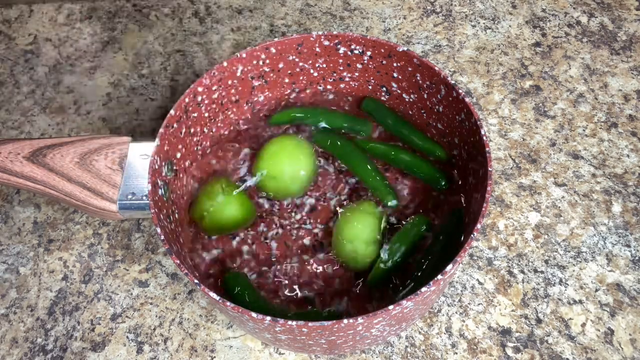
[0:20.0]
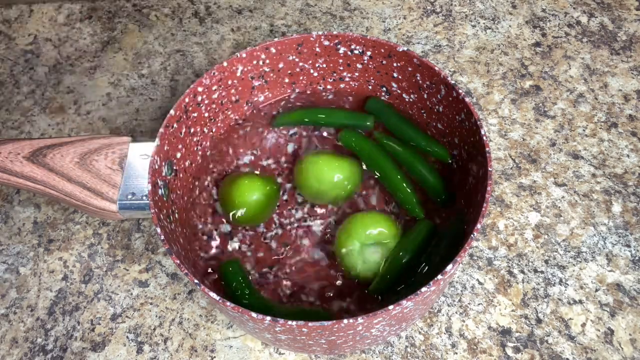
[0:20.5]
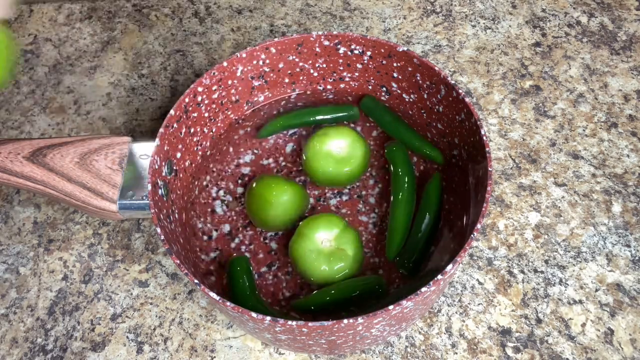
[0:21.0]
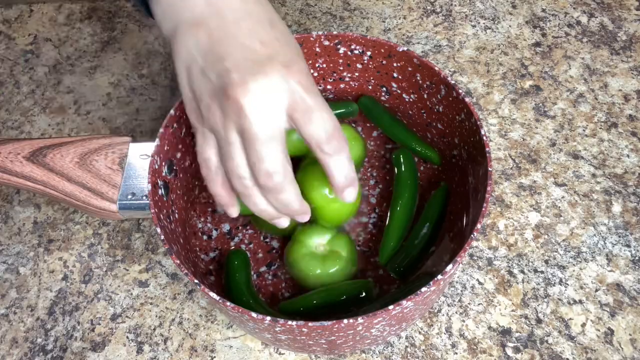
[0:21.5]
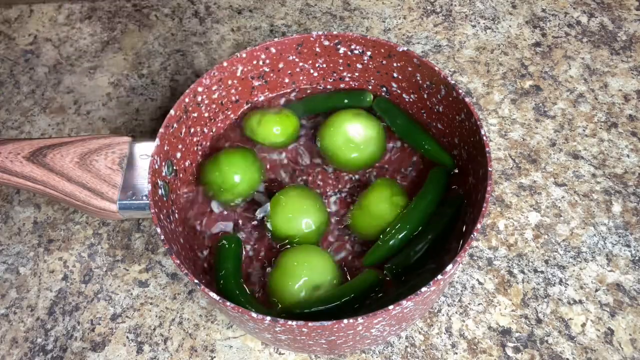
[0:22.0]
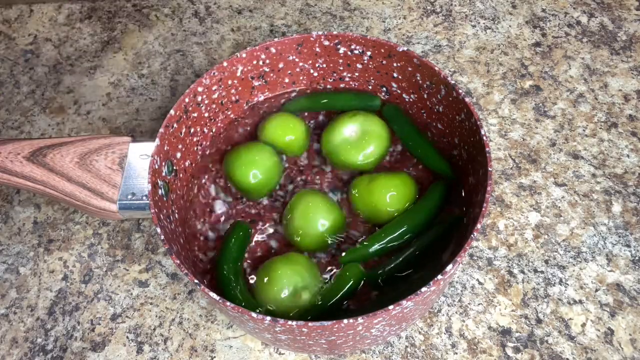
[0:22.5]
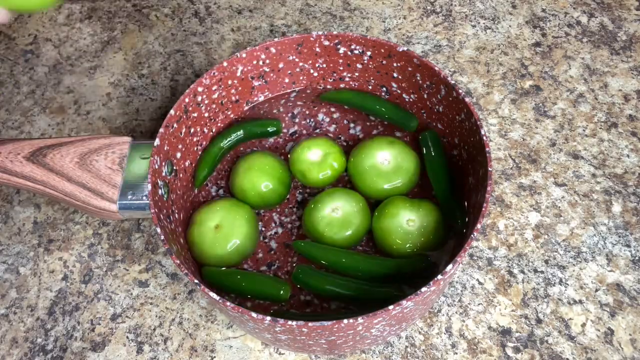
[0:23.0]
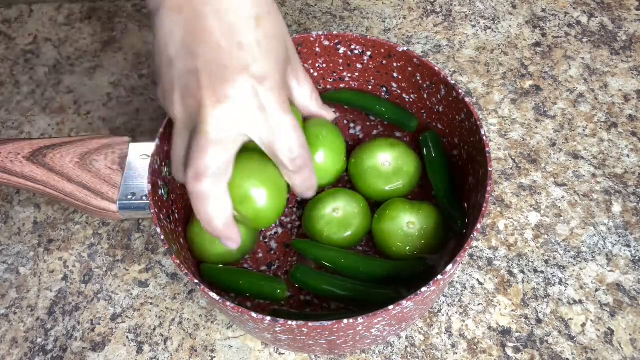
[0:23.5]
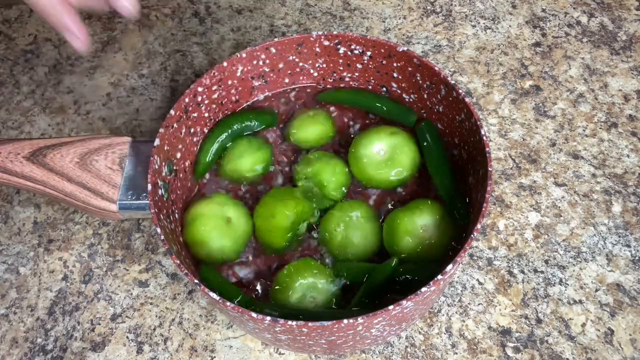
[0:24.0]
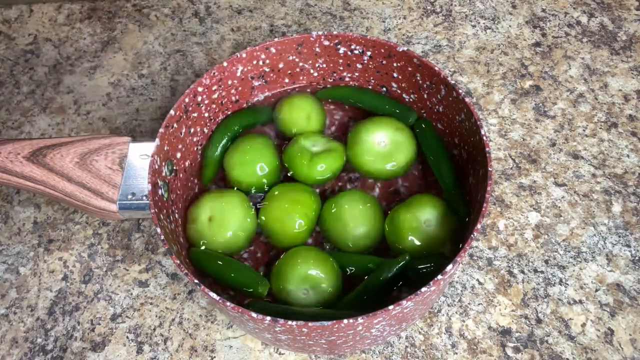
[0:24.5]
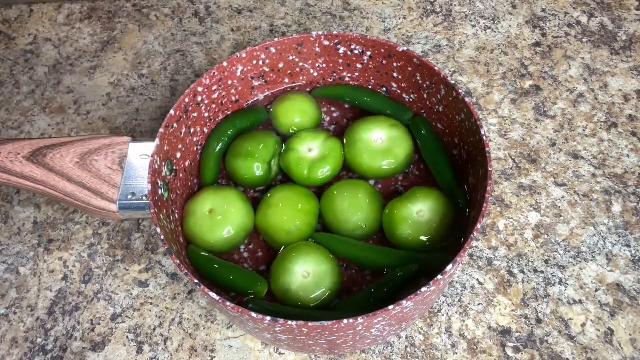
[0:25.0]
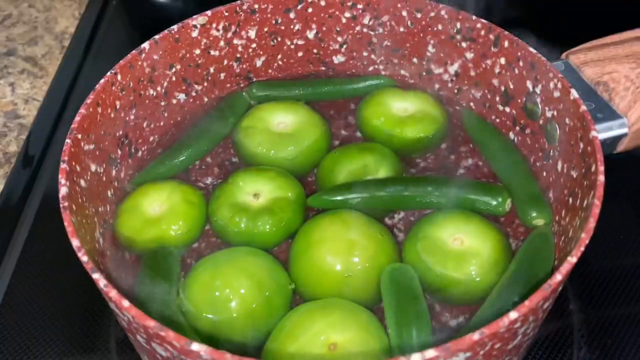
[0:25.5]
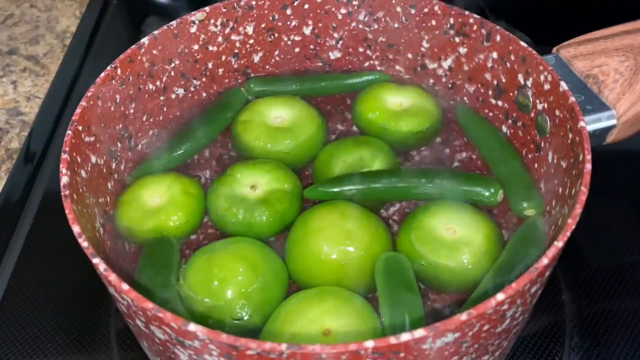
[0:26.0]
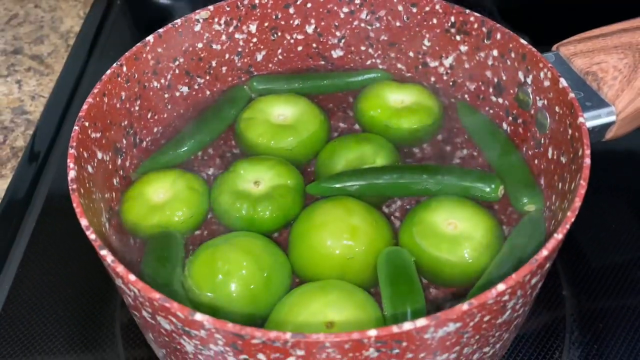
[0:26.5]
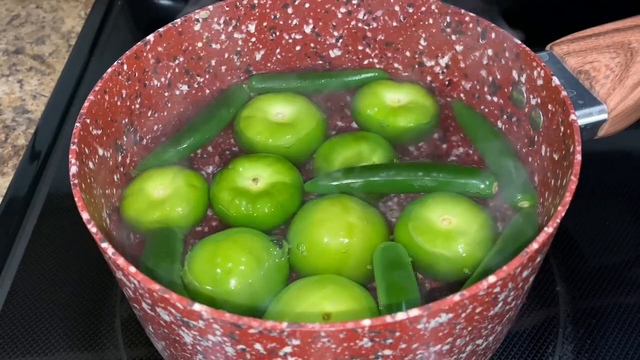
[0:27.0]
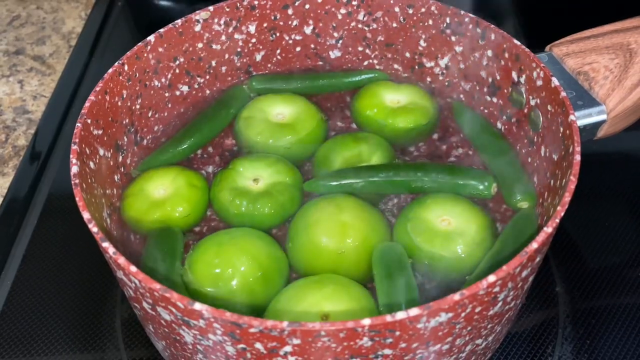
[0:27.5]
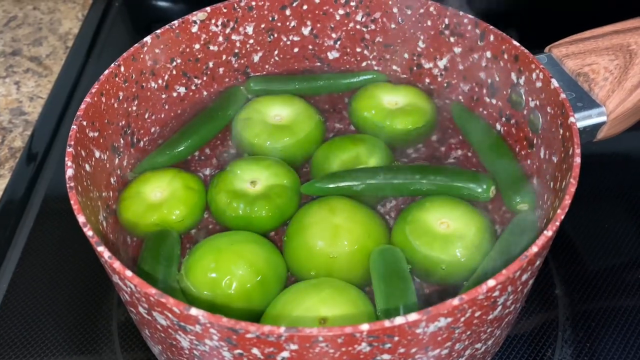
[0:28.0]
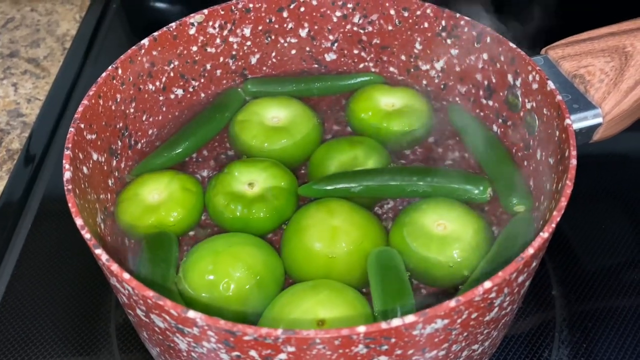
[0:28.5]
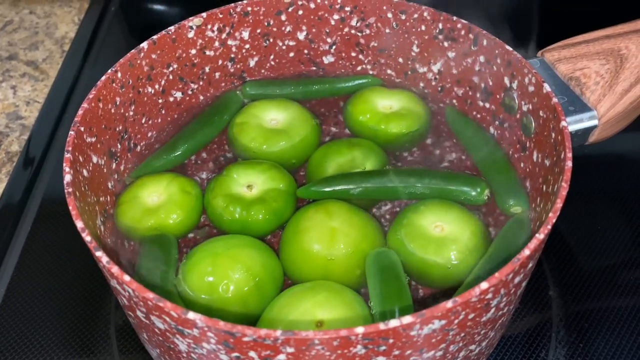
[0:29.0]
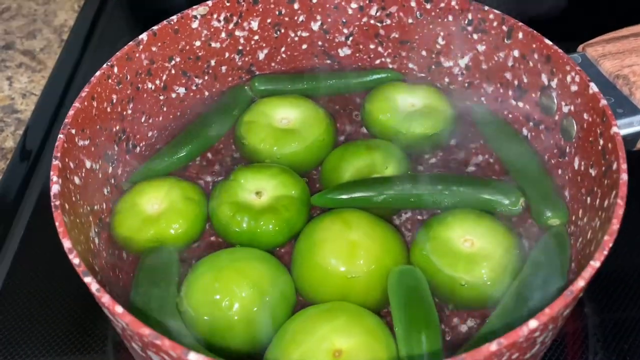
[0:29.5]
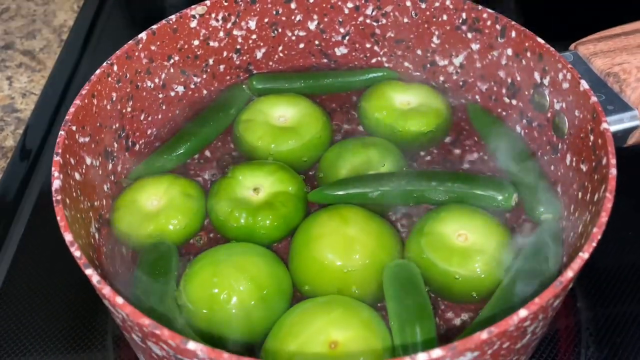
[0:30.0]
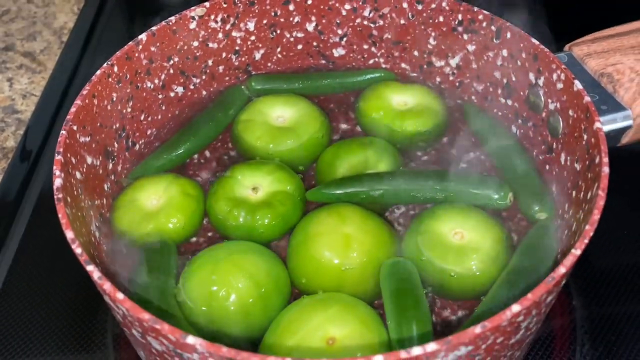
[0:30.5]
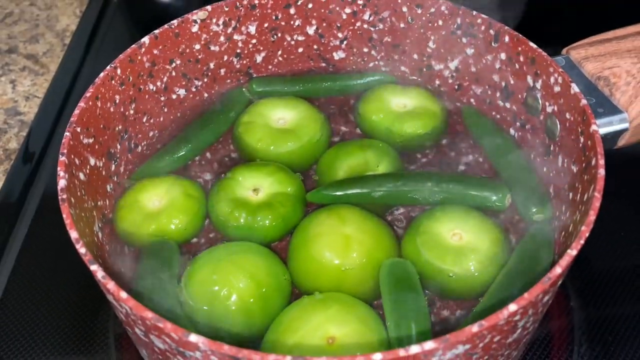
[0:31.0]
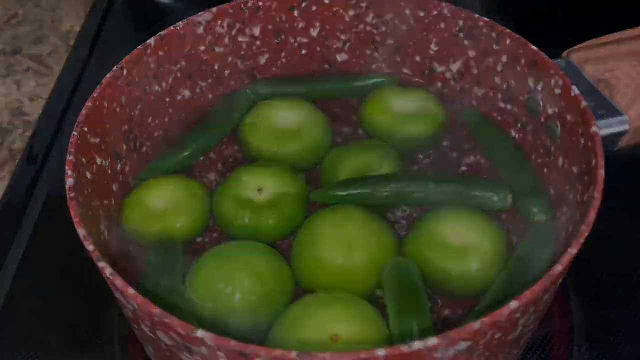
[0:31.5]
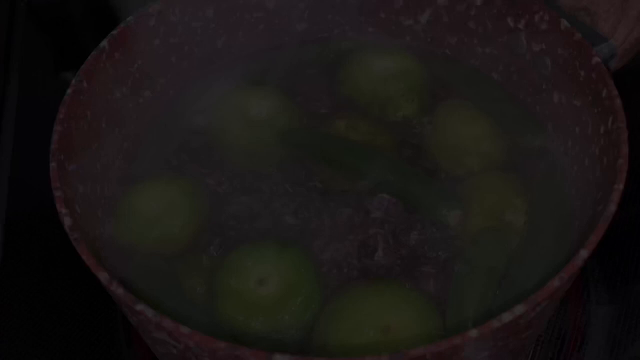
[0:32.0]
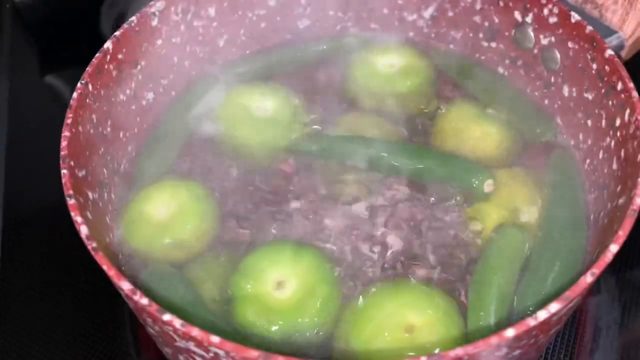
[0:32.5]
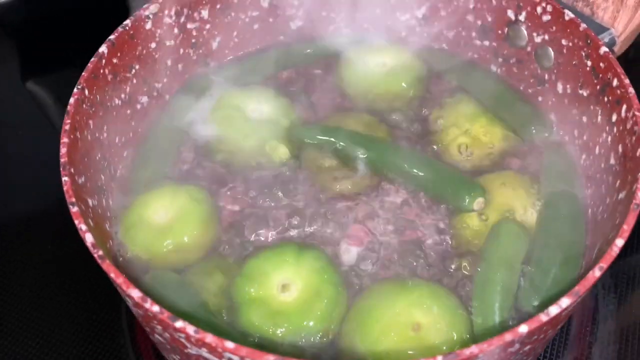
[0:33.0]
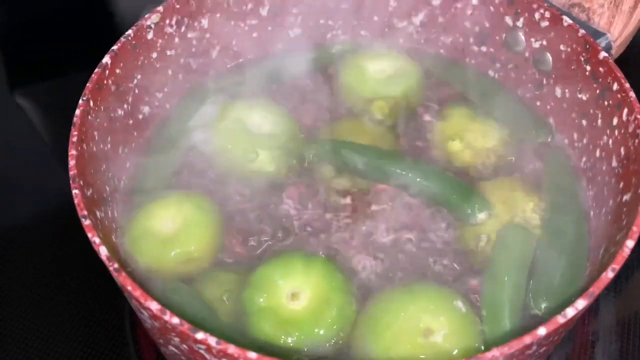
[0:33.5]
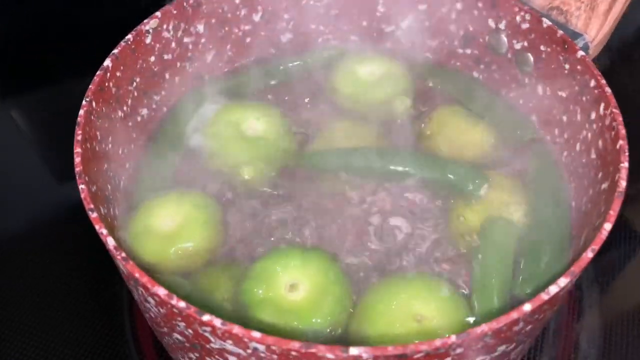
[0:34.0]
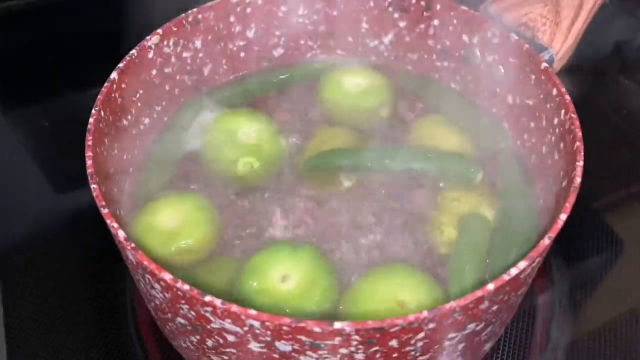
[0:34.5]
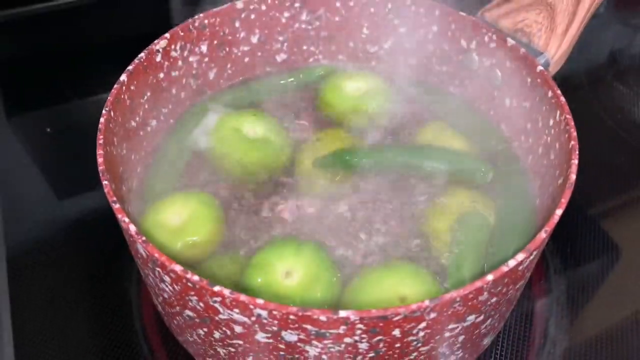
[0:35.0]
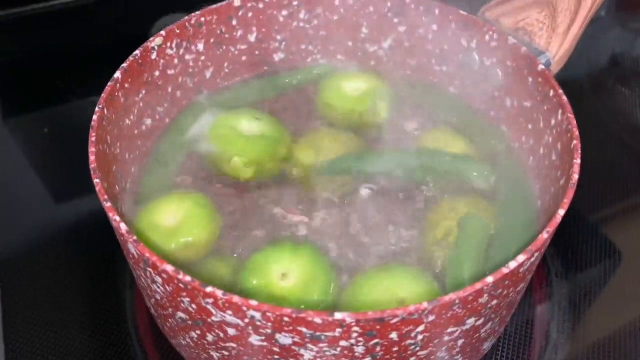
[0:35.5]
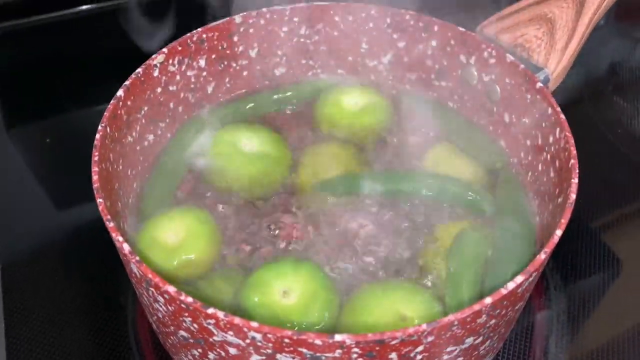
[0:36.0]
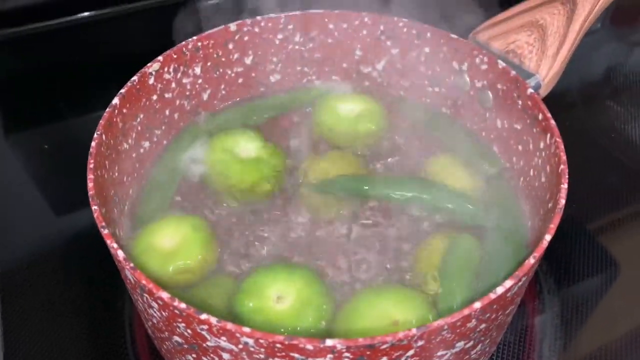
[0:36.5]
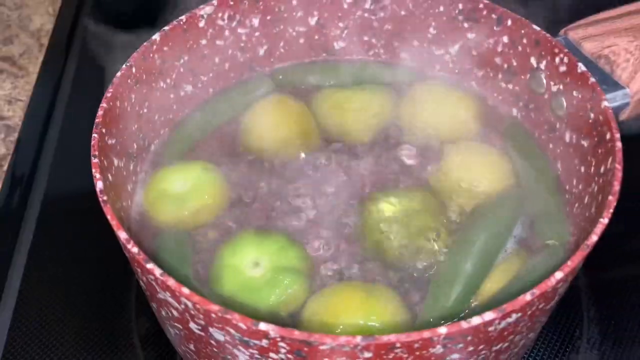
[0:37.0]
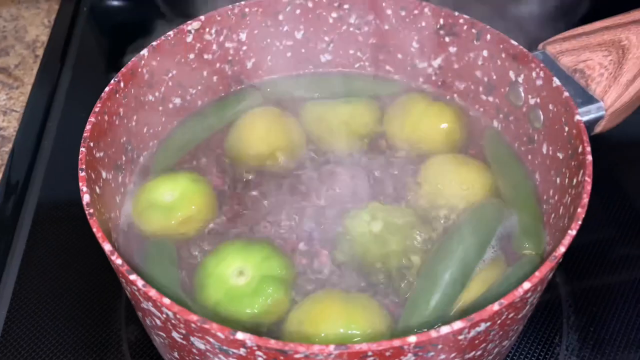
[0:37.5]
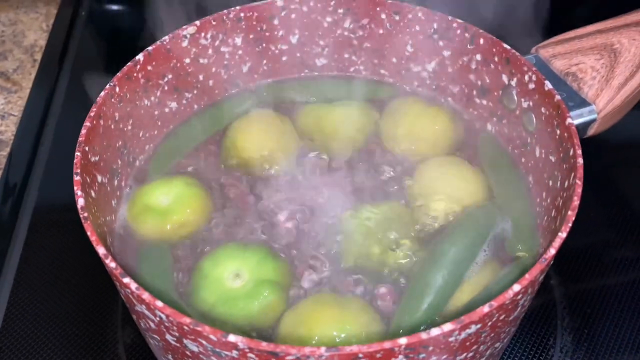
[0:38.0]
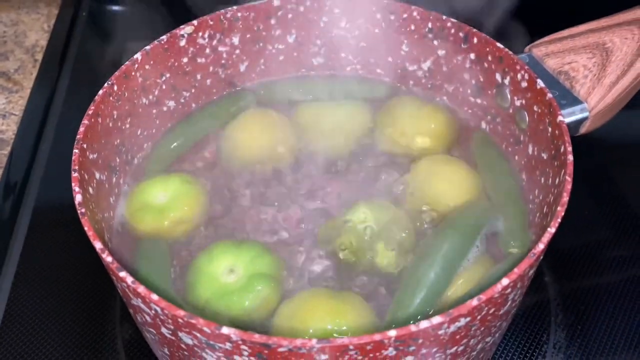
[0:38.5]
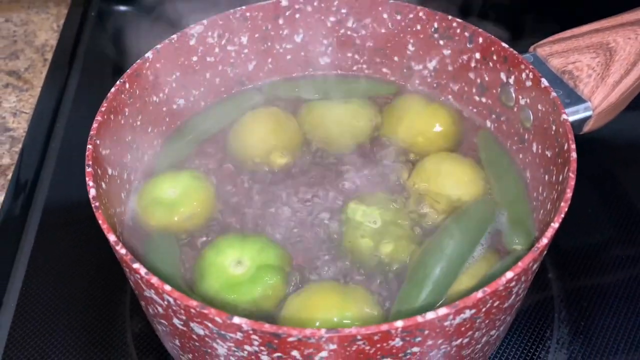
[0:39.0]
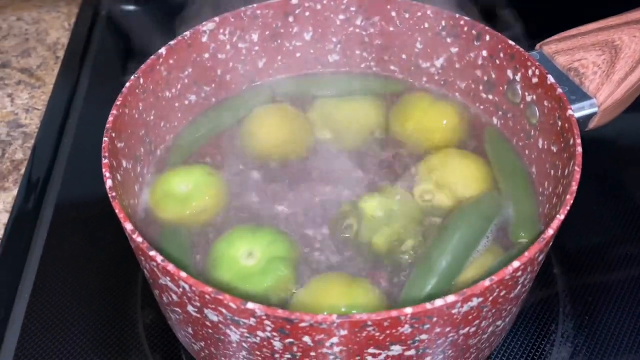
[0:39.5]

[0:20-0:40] A red pan with white and black patterns and a wooden handle with triangular designs is on a ceramic table. Inside the pan are green vegetables and green limes, with water boiling among the vegetables. A hand appears from the top left of the screen and drops in more limes, then comes back and drops in even more, leaving the pan full of limes. The scene transitions to a closer view of the pan, where multiple limes and a couple of small other vegetables are boiling as smoke rises. The scene then shows the pan at a hard boil; the water is darker from boiling, and smoke rises from the pan and covers much of it. The camera then pans back out from the pan.